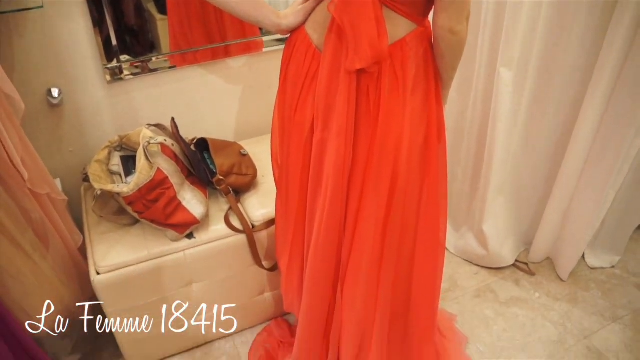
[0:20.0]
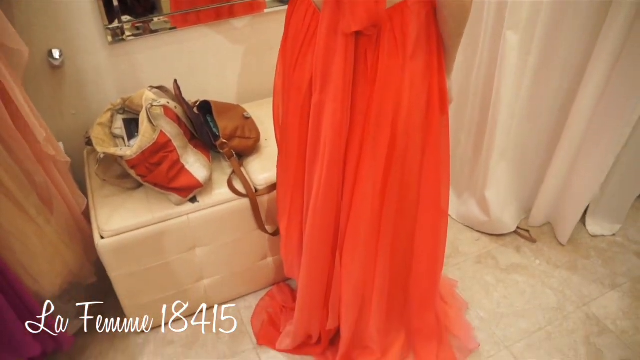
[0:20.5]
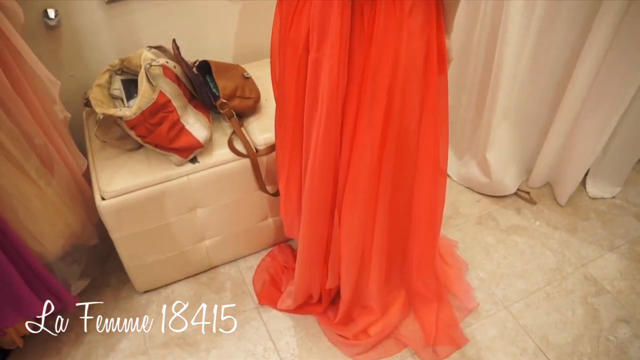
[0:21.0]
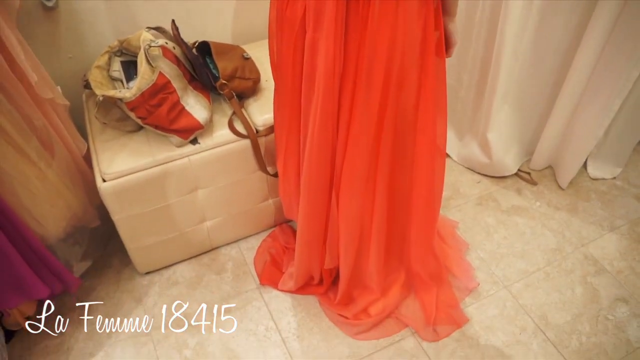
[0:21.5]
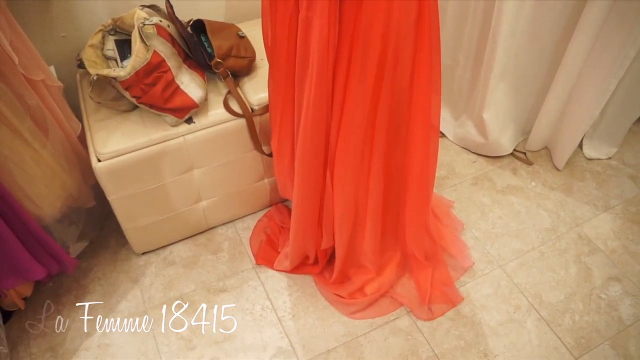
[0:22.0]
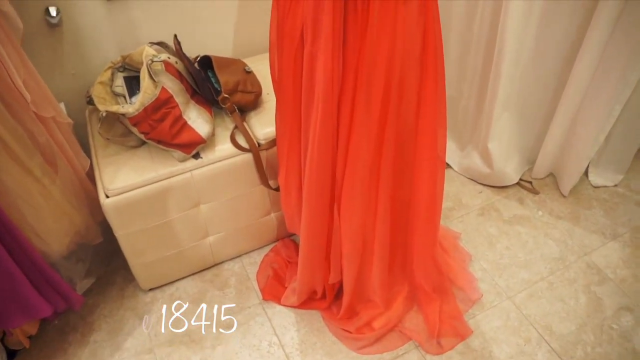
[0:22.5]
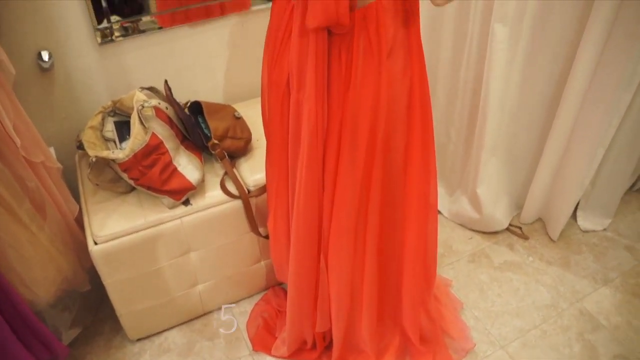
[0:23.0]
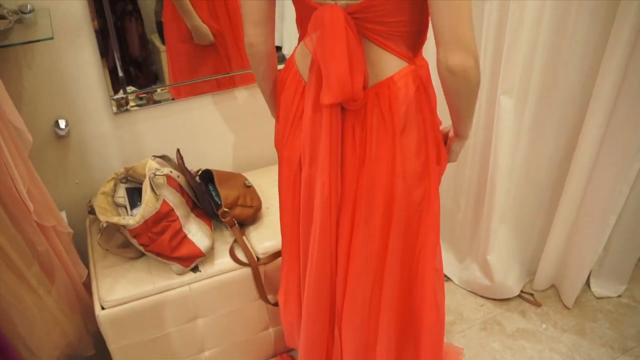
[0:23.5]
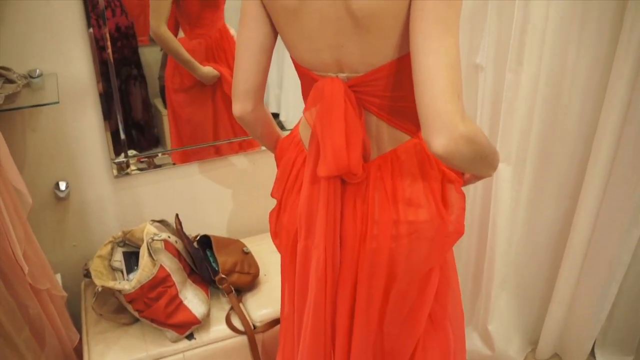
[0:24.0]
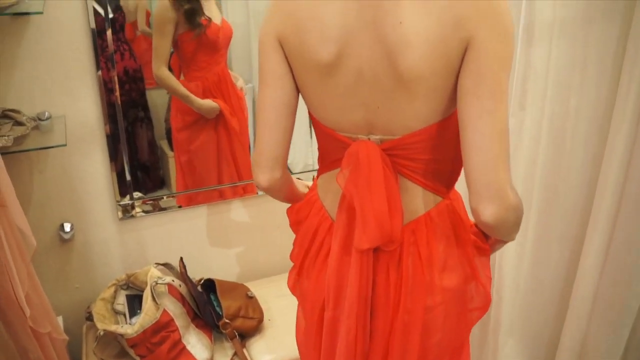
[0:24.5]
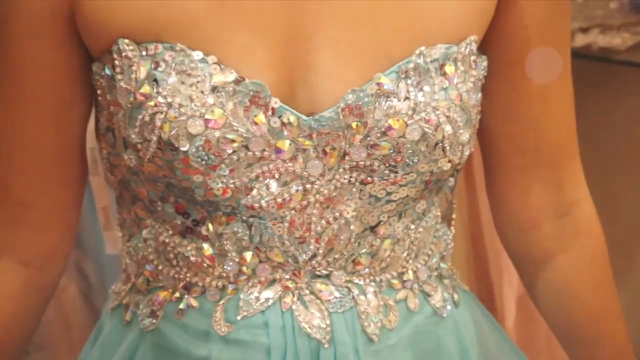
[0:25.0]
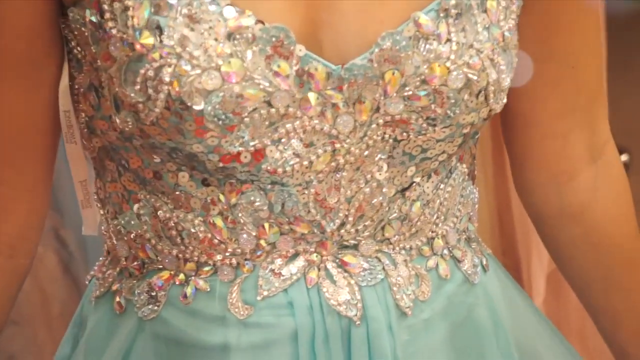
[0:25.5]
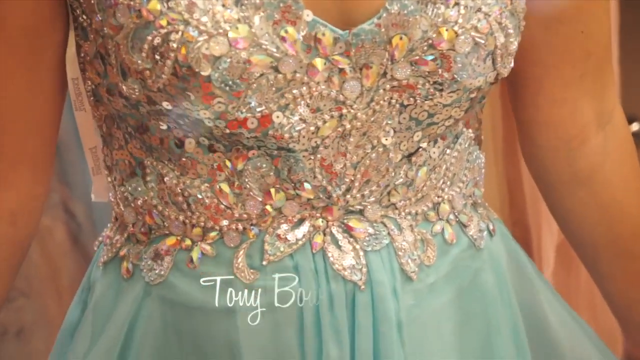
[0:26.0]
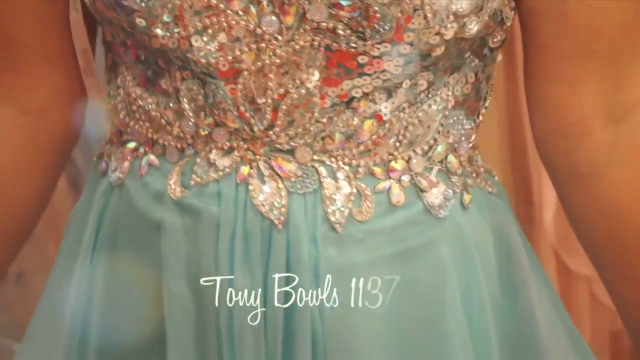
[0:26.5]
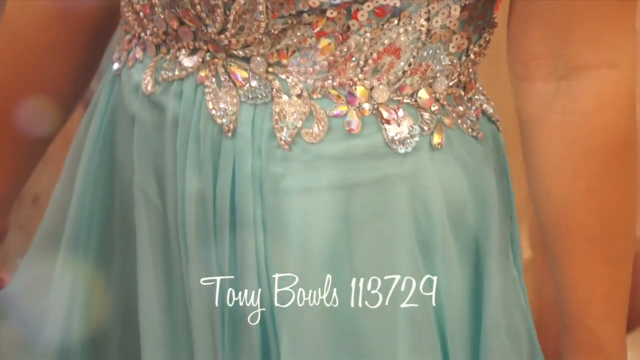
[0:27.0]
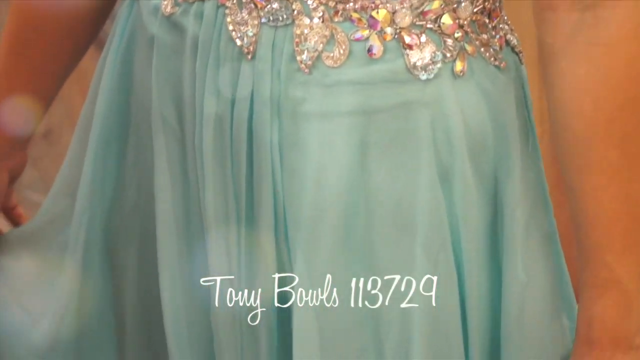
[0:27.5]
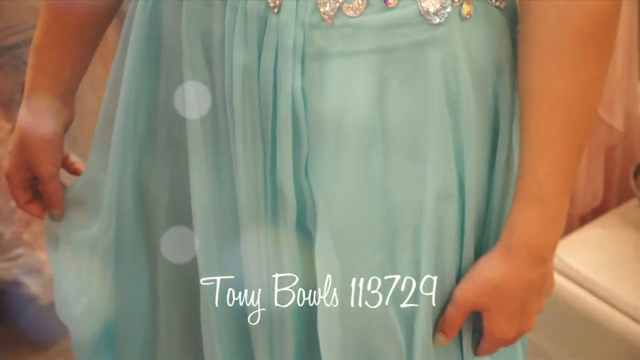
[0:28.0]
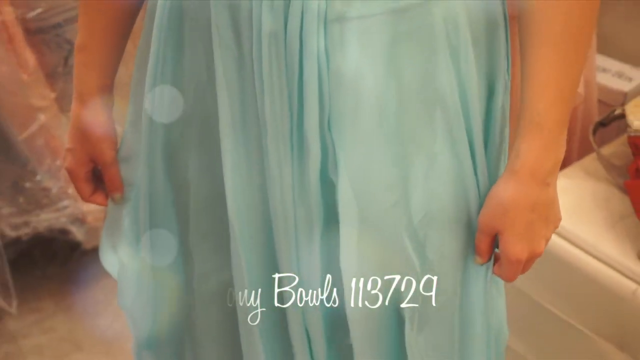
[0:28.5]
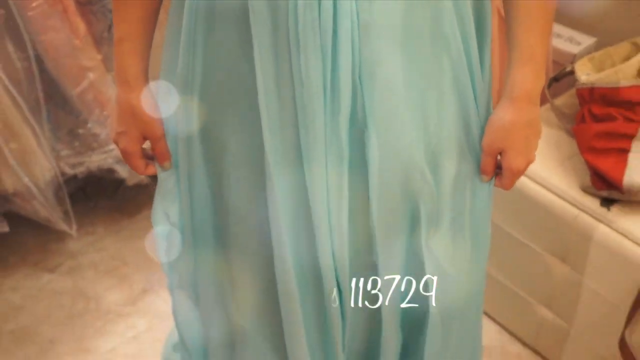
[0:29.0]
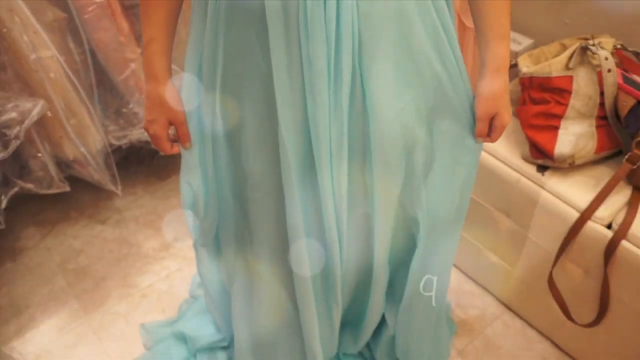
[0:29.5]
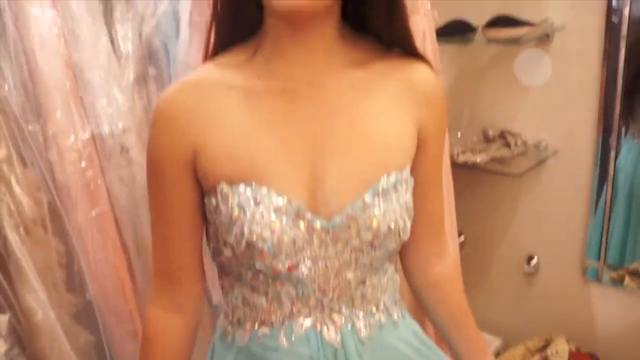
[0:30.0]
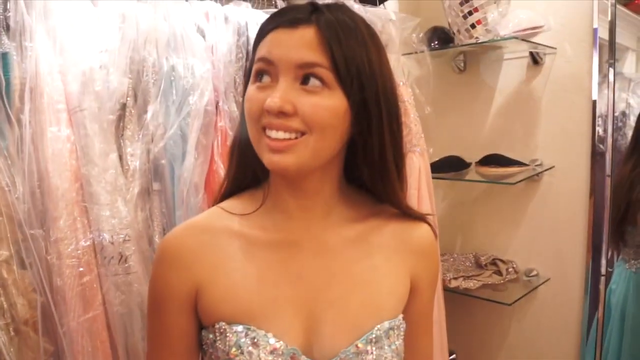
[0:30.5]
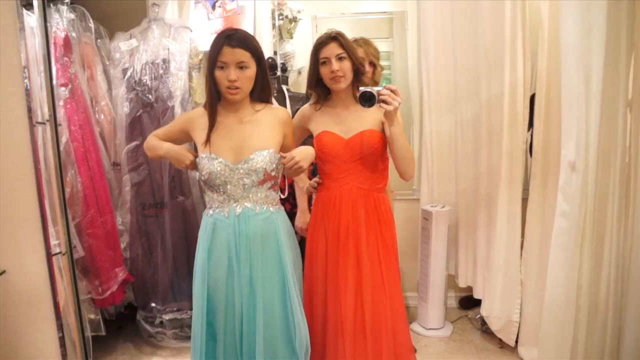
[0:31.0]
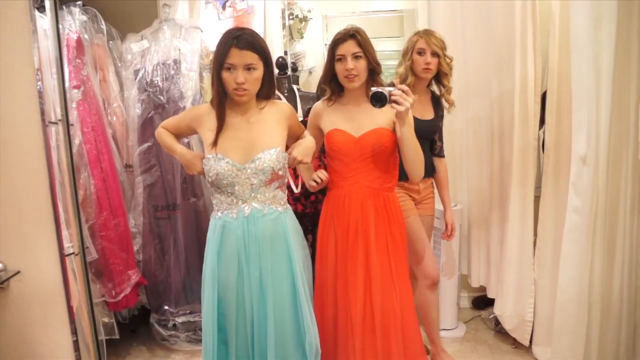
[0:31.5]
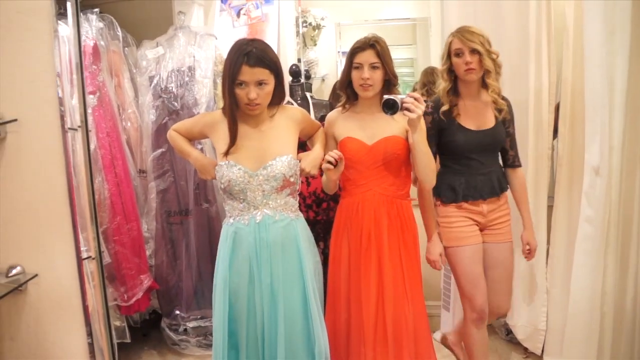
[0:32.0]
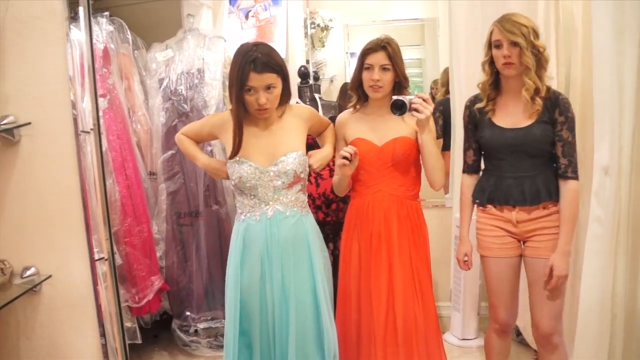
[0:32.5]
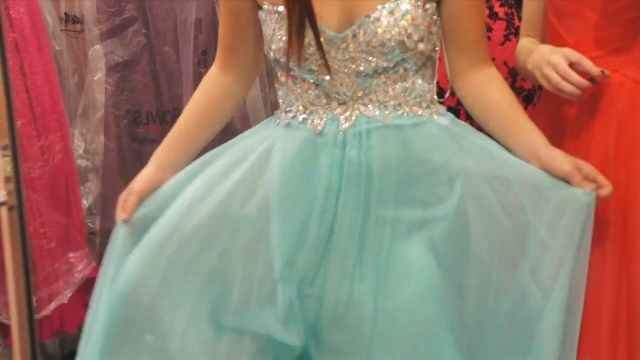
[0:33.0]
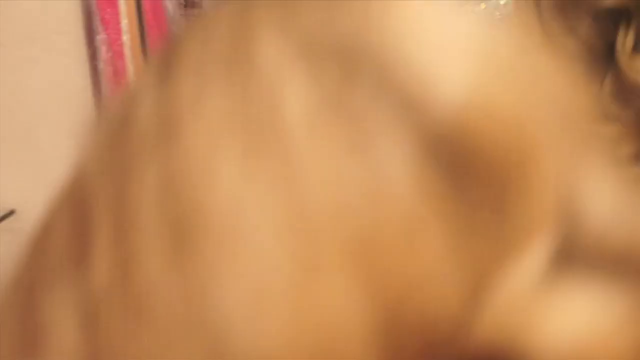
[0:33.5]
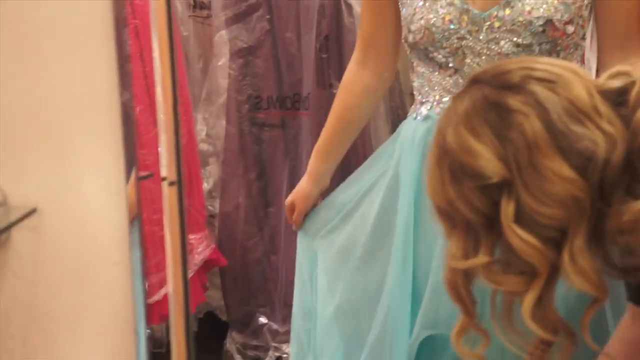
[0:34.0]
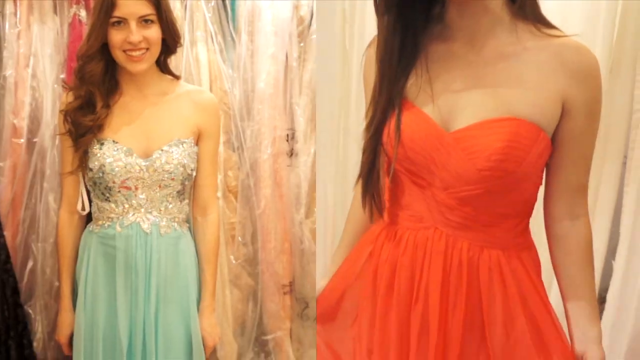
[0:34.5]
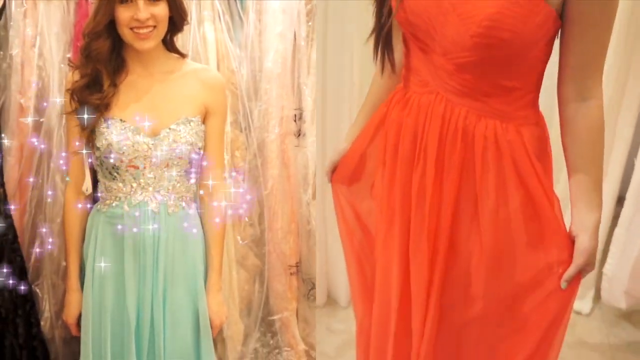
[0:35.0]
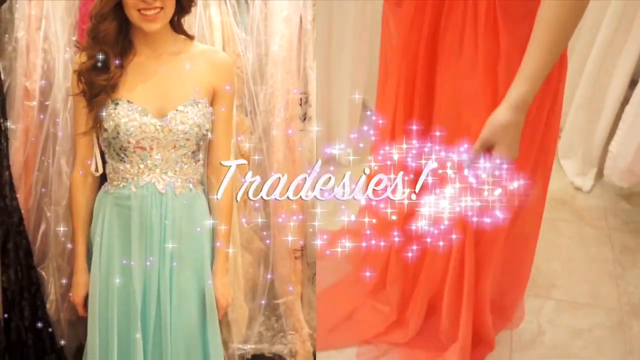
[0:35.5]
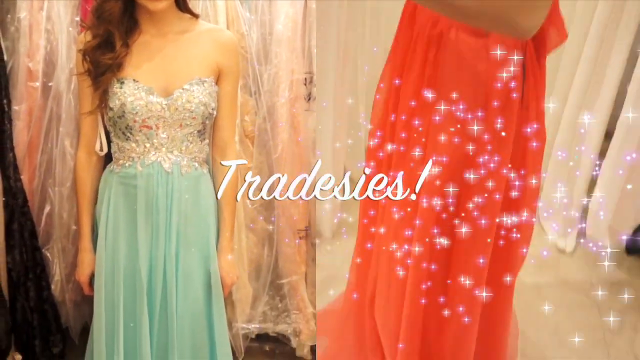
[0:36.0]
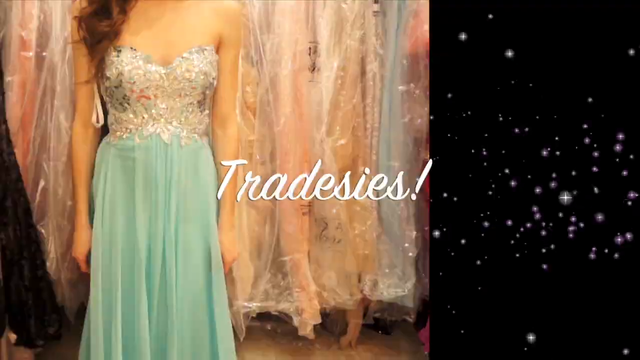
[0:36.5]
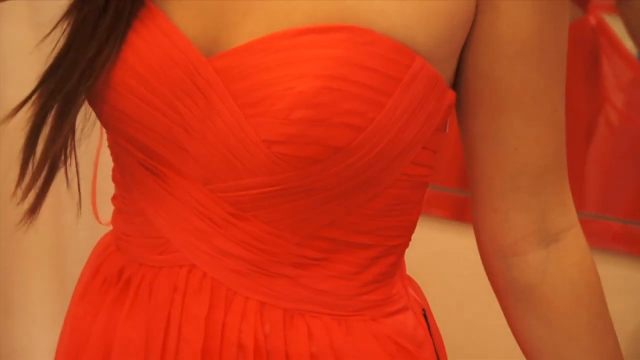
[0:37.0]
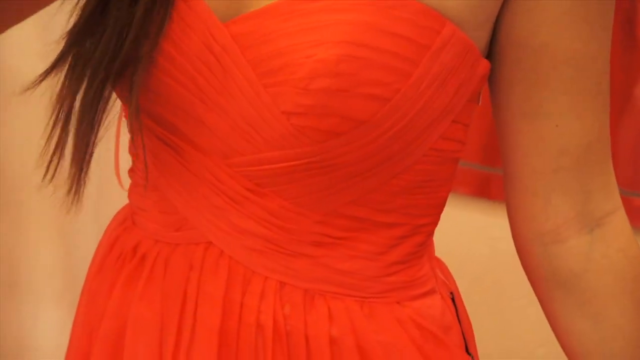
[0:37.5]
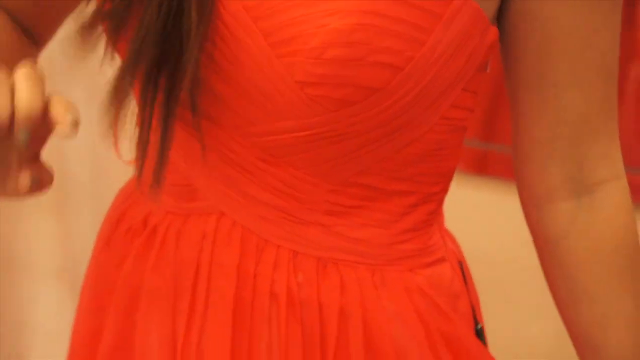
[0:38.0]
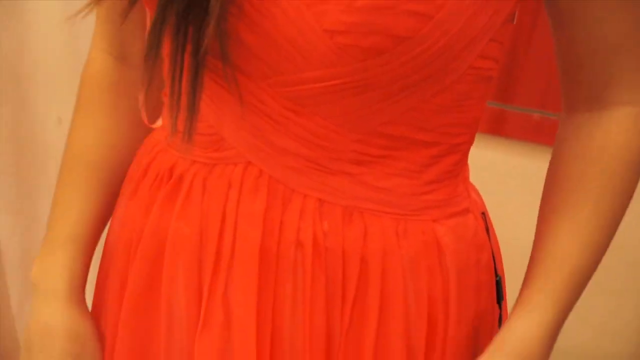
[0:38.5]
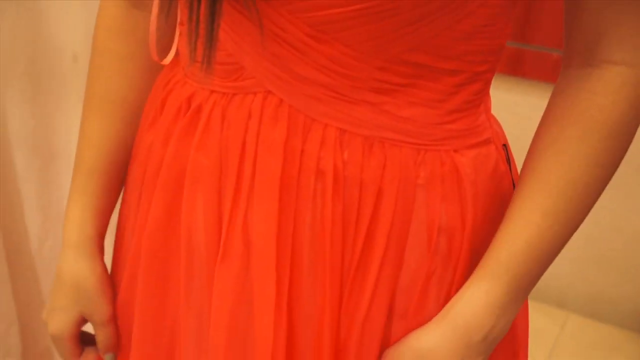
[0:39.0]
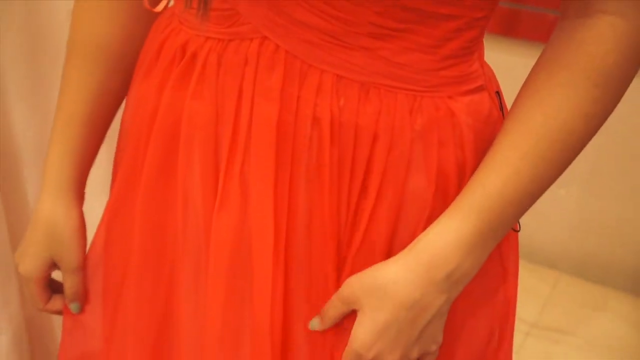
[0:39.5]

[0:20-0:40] The lady tries on the orange prom dress, with white curtains on the right and left sides of a tannish room and the lady's brown purse. White text in the lower left-hand corner reads "Le Femme, 18415". Next, somebody tries on a bluish dress, with white text at the bottom of the screen reading "Tony Bowles". The top part of the dress has what looks almost like a lot of jewelry in blues, silvers, yellows and some teal greens mixed in. The camera pans up to show the girl's face; she has brown hair and almost looks Latino, Mexican or white. Three girls are then shown: the lady in the orange, the lady in the blue, and someone with blonde hair coming up who doesn't appear to be wearing a prom dress, just a black top over peach-colored shorts. They are young teenagers. The one in the orange holds a camera and takes a selfie.